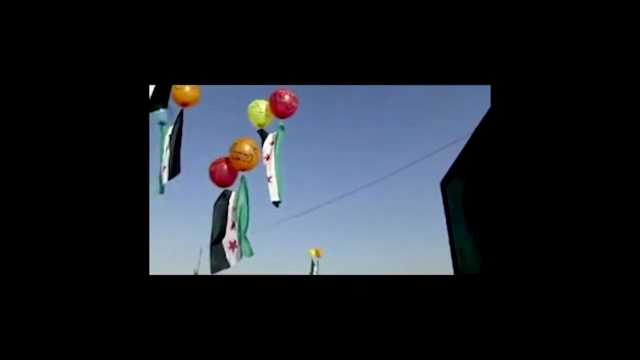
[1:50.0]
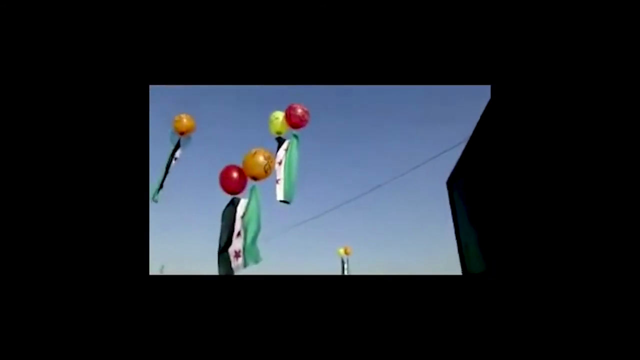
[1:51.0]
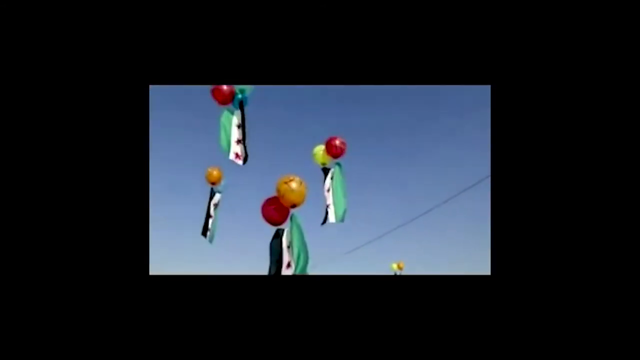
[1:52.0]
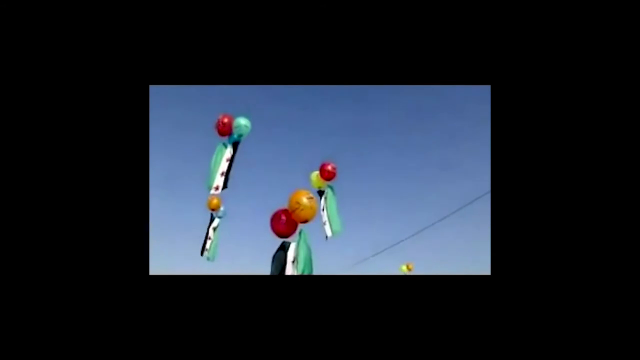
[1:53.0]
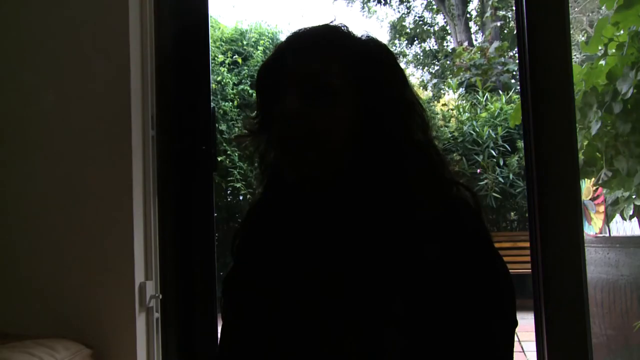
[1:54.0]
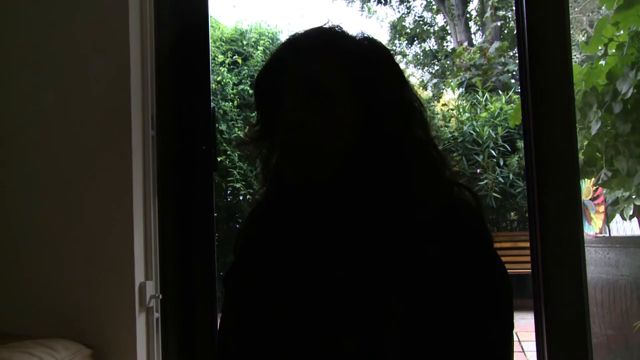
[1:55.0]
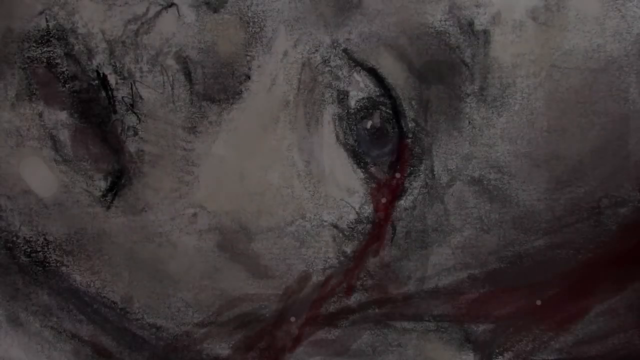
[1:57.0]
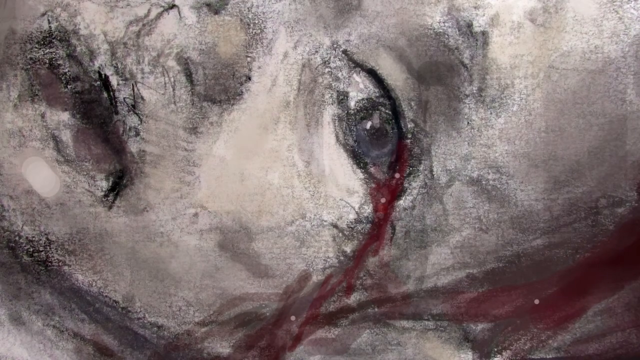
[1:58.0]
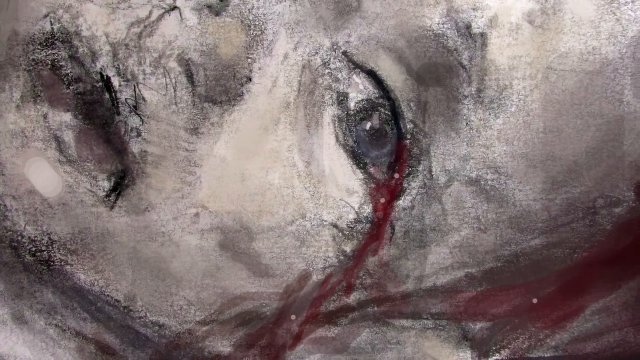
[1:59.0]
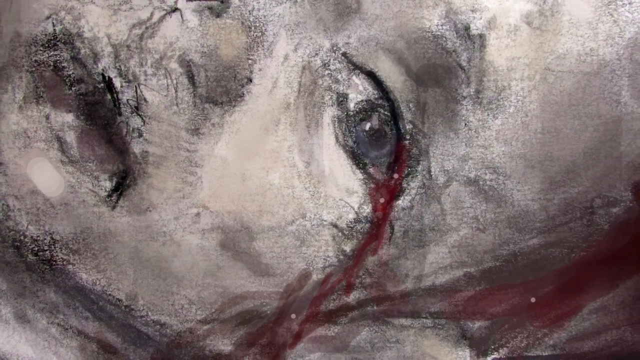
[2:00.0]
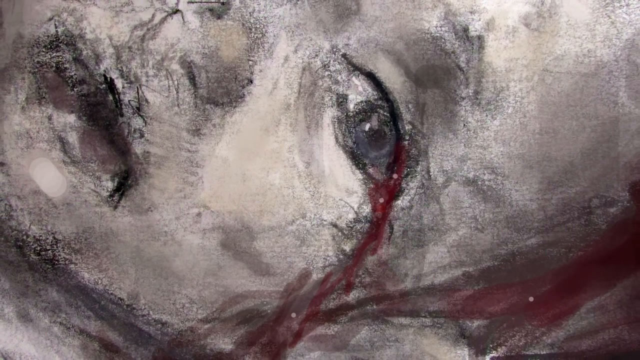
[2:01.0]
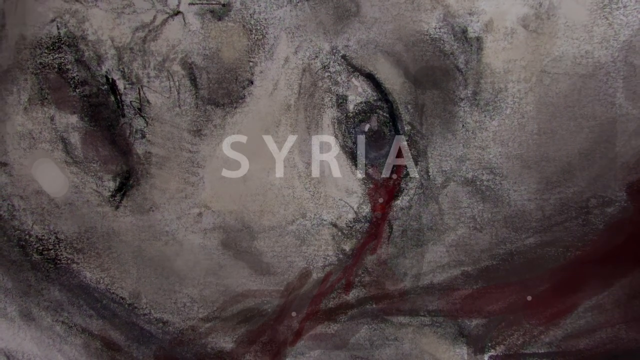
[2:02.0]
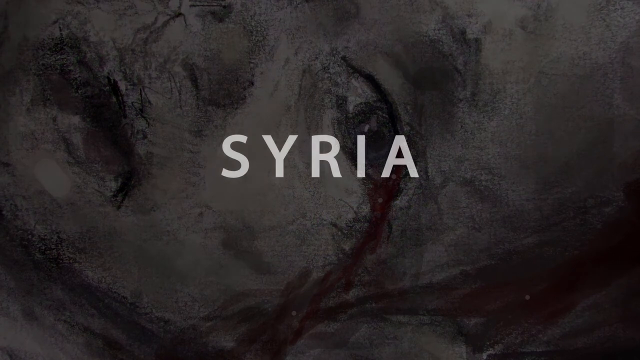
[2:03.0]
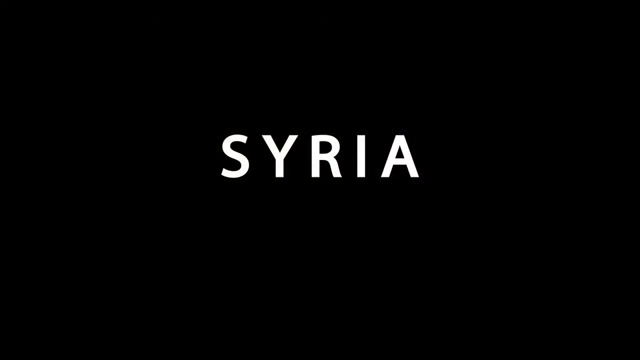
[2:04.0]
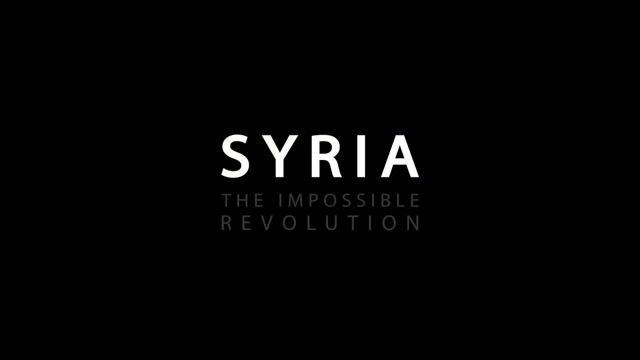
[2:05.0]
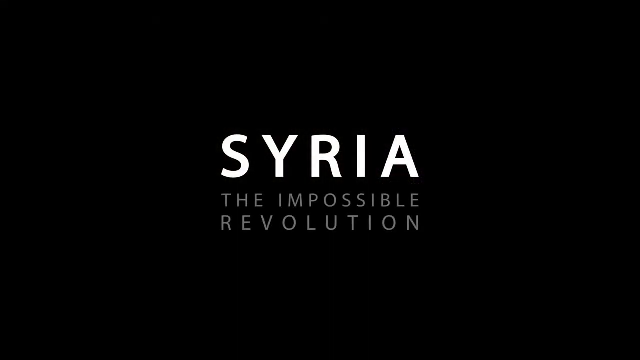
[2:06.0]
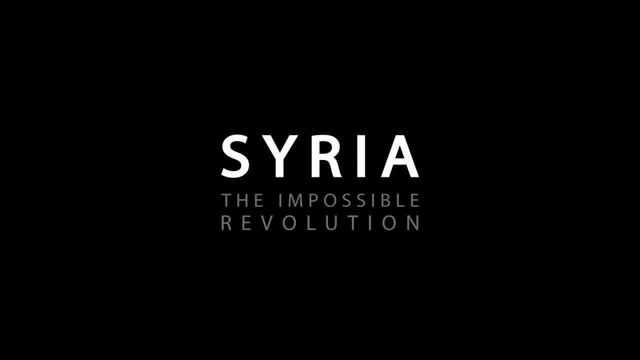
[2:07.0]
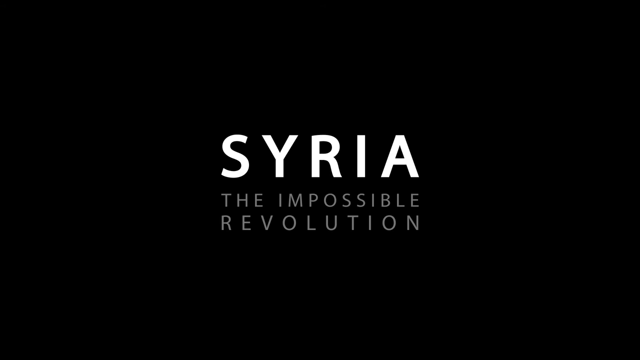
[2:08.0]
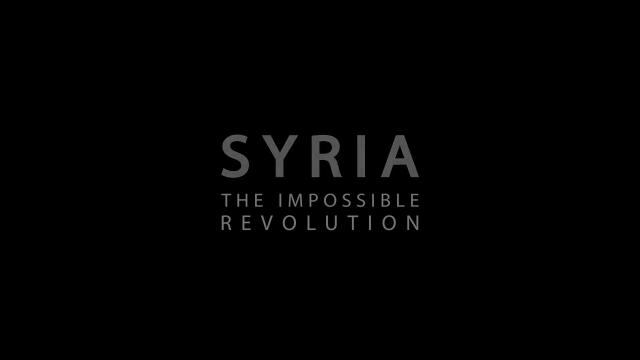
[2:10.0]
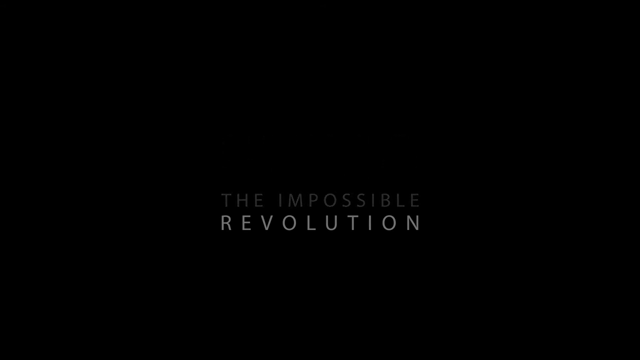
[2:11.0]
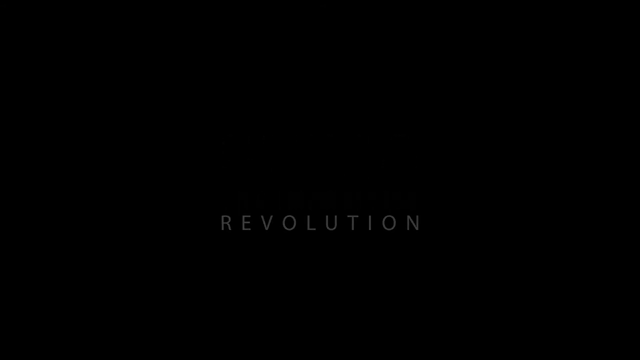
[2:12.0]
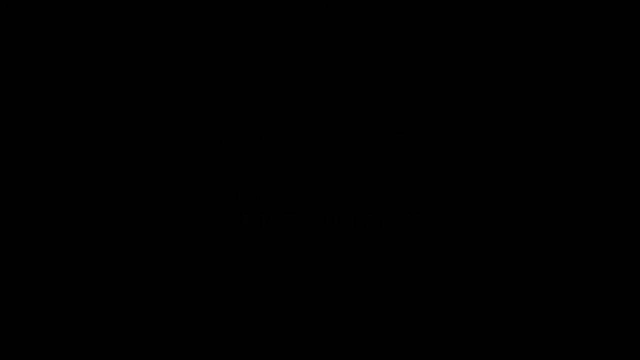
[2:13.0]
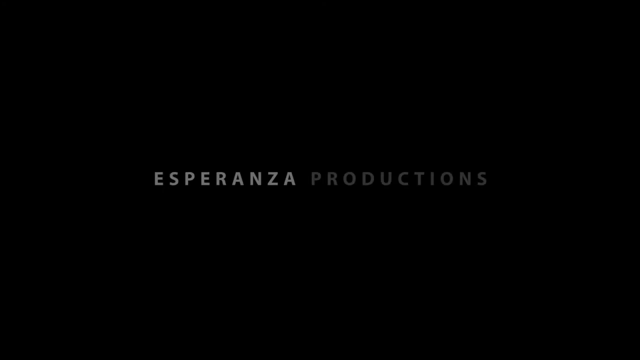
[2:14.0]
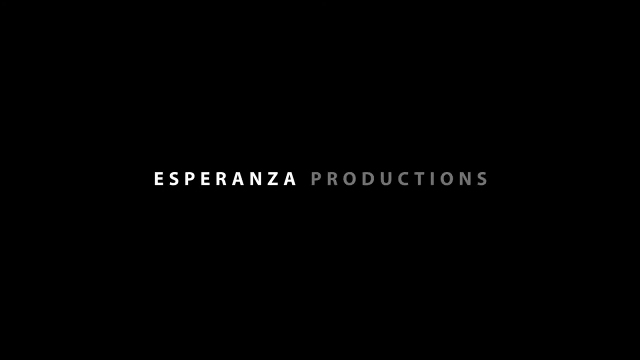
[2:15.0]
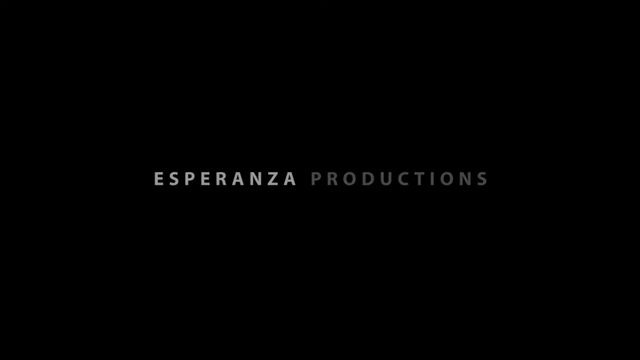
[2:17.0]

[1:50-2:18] One balloon is red and another is orange as the flag is flown. A picture shows a baby crying blood, and the words "Syria the impossible resolution" appear.